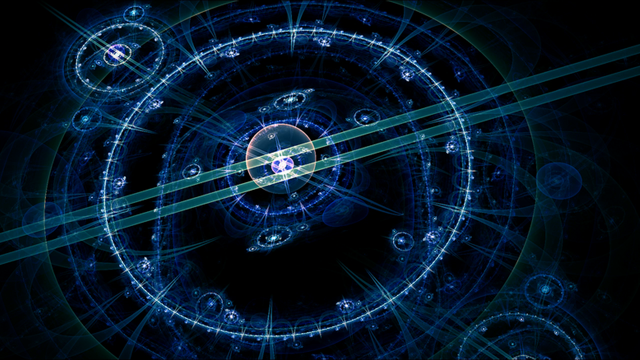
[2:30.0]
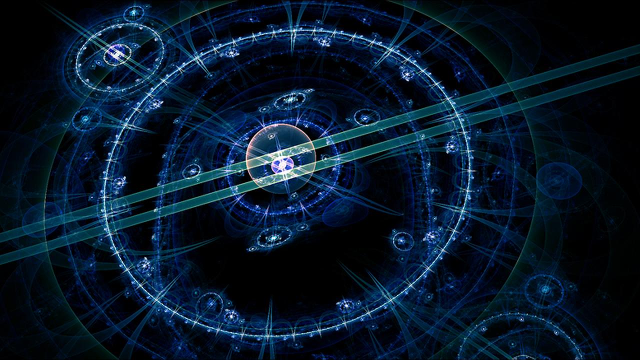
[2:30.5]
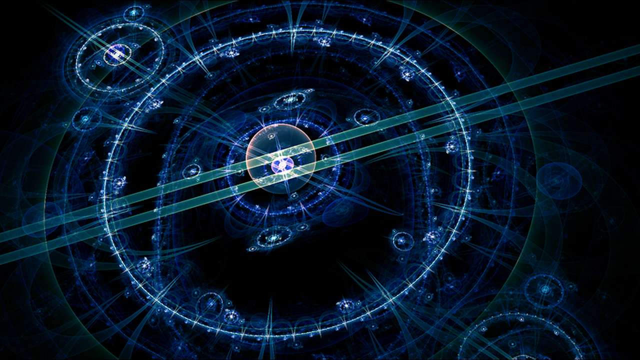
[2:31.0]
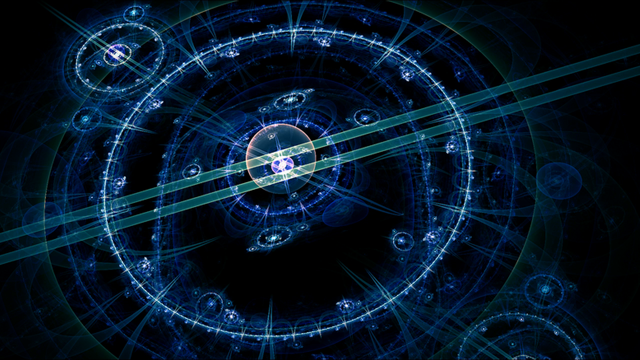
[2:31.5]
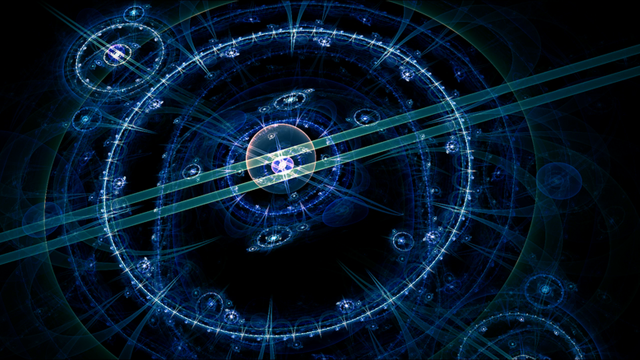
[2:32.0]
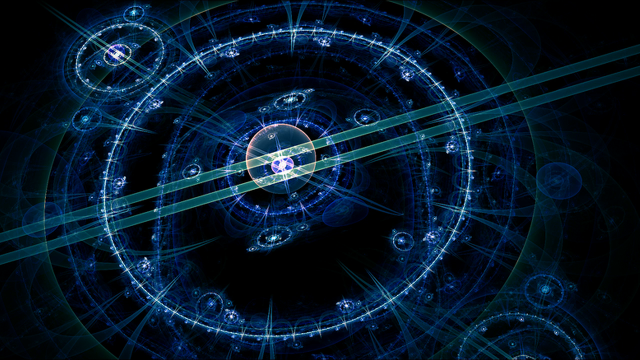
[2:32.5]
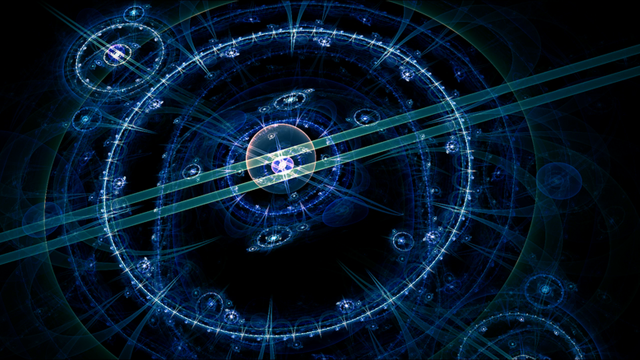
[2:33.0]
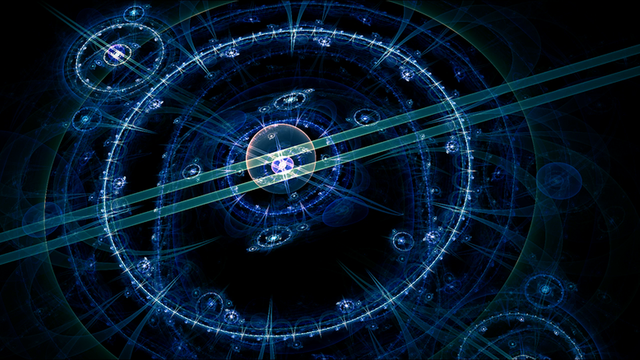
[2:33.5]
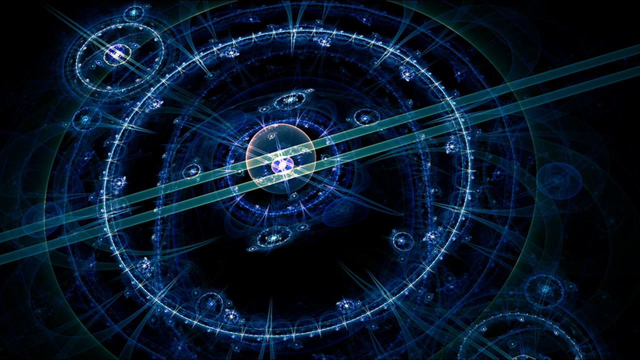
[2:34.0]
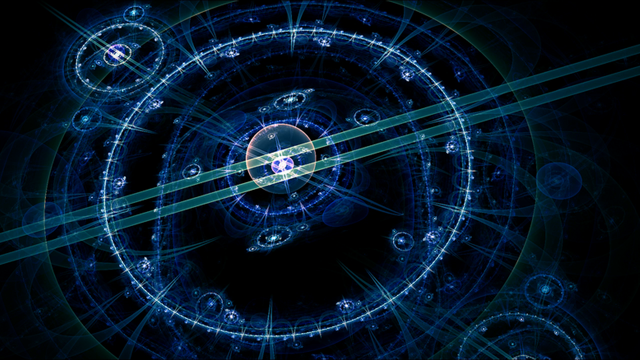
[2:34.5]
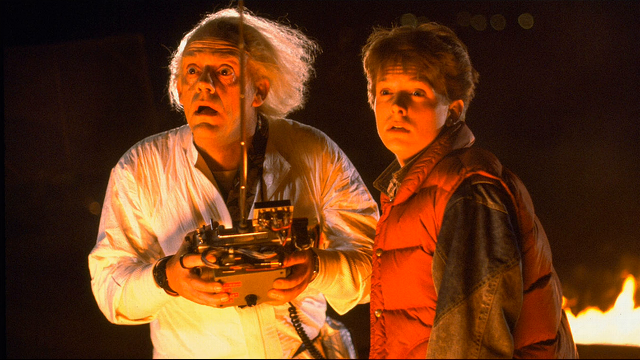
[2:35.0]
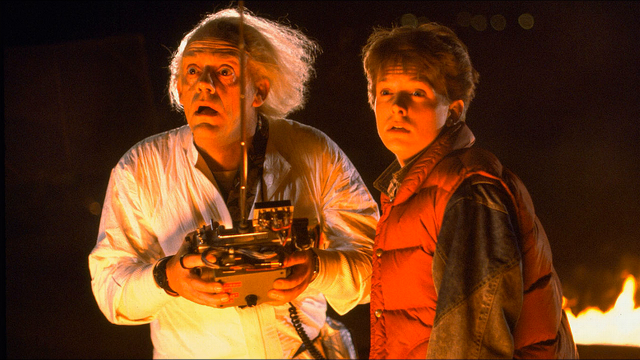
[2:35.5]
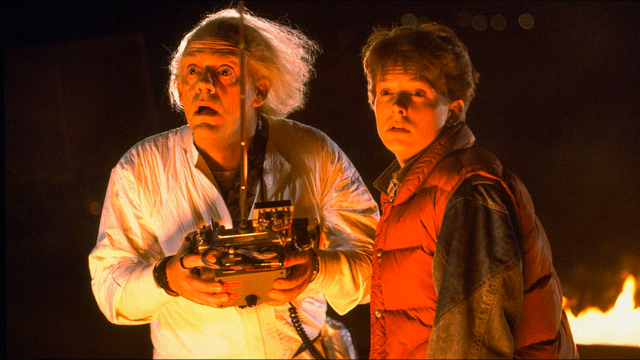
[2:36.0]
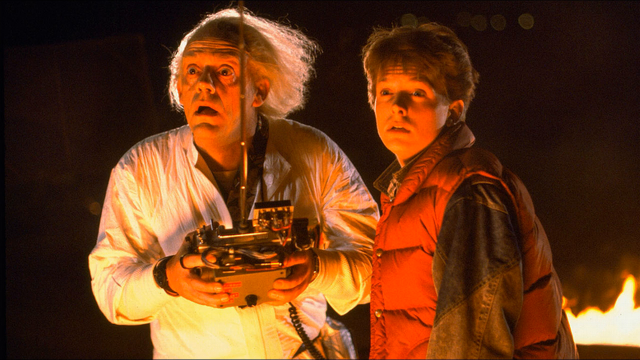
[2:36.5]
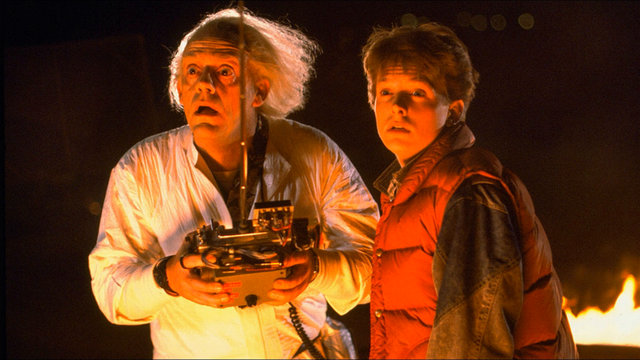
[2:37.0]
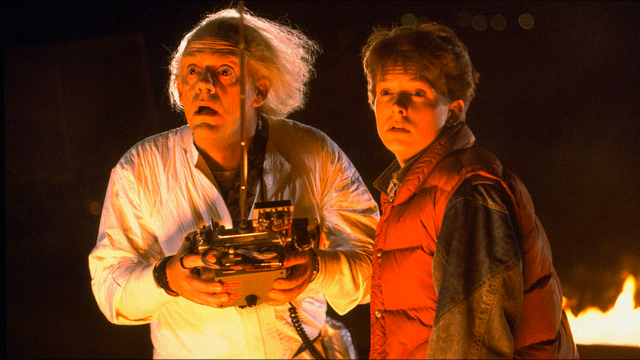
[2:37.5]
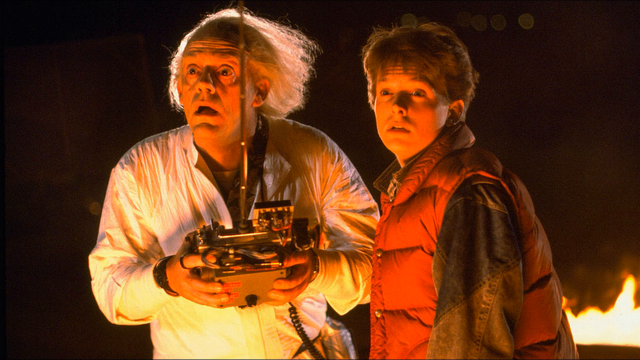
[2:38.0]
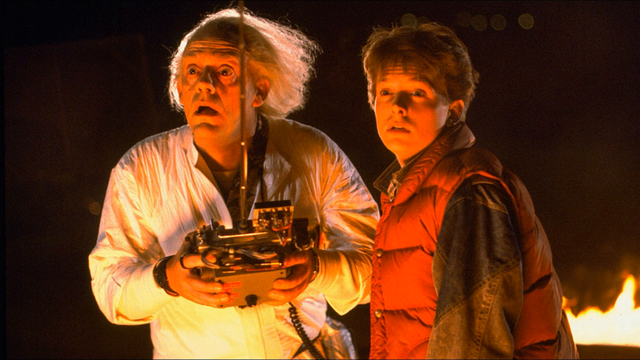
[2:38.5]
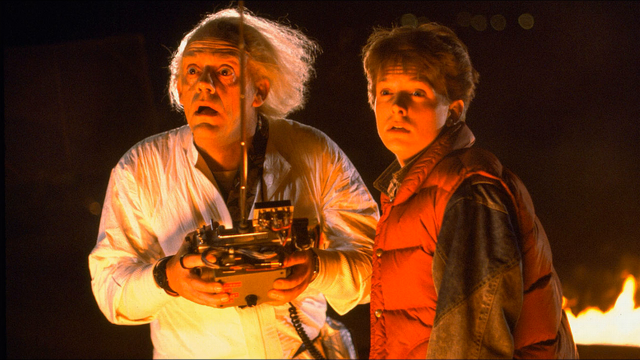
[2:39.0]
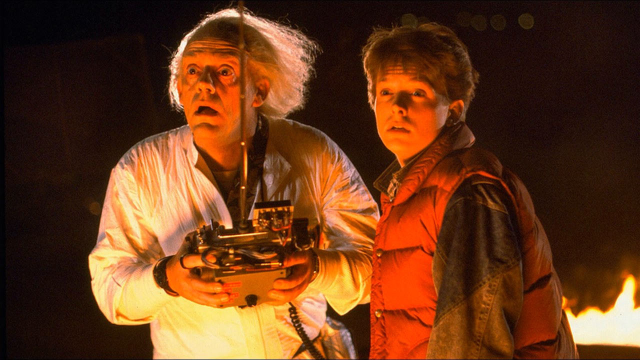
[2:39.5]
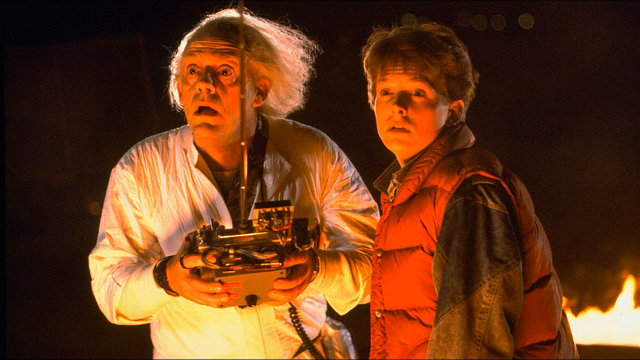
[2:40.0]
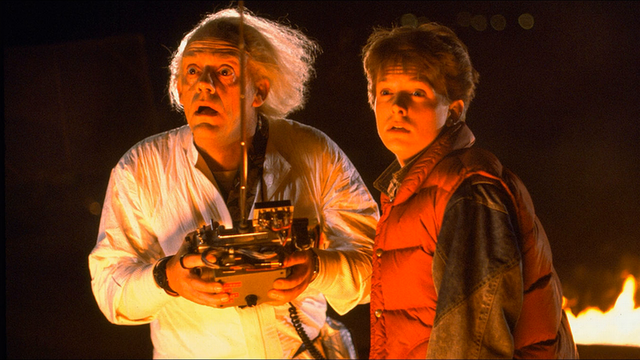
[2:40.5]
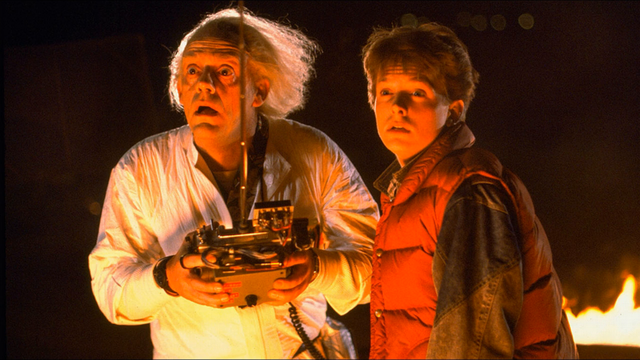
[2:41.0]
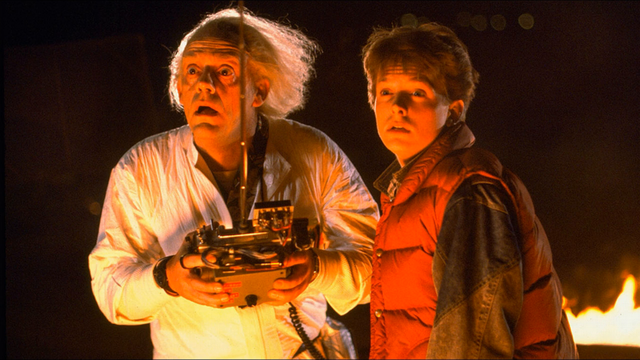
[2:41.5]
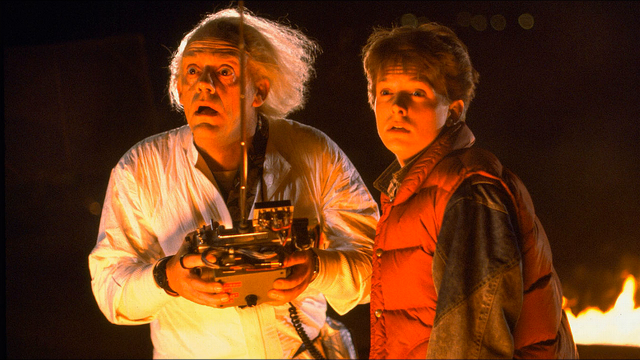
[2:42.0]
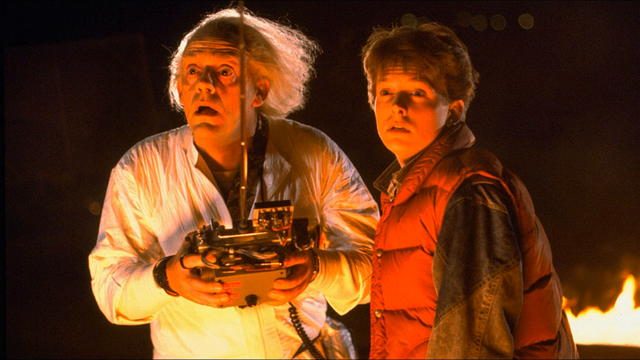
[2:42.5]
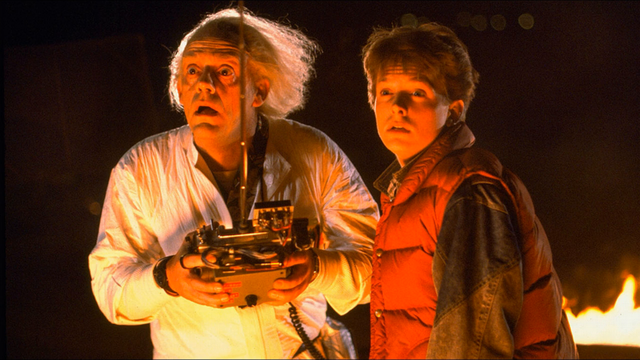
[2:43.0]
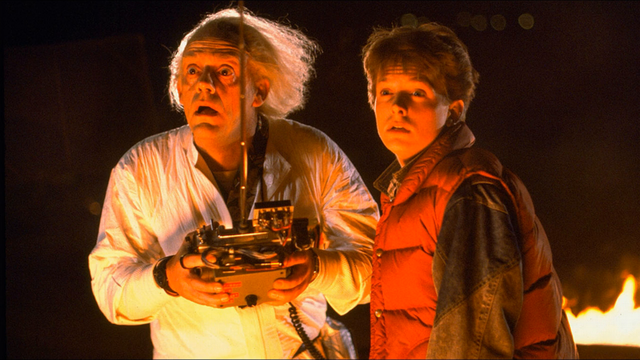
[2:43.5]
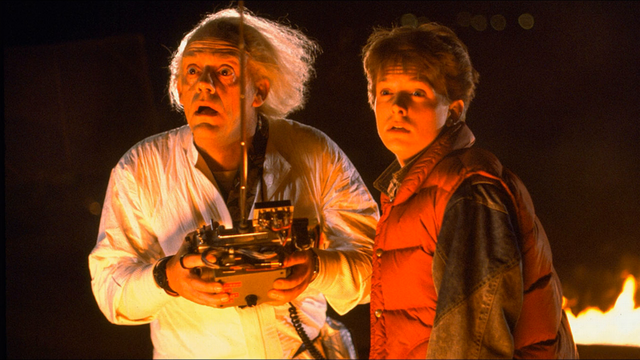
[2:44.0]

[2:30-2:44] The image of the clock remains briefly. A couple of seconds later, the two characters from Back to the Future appear. The professor holds what seems to be a time machine of some sort, like a little controller. Both look fearfully at something in front of them, and there seems to be a ring of fire behind them. It seems very windy, as the professor's hair is blown all the way back. The professor wears a white lab coat, and the person to his right wears an orange vest. Both have their mouths wide open.